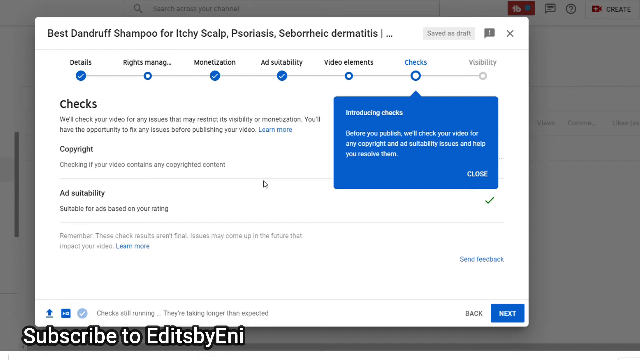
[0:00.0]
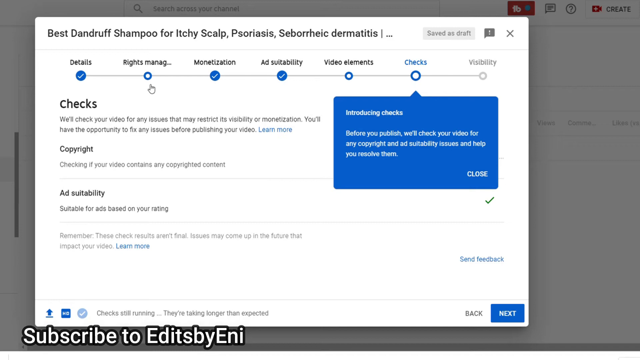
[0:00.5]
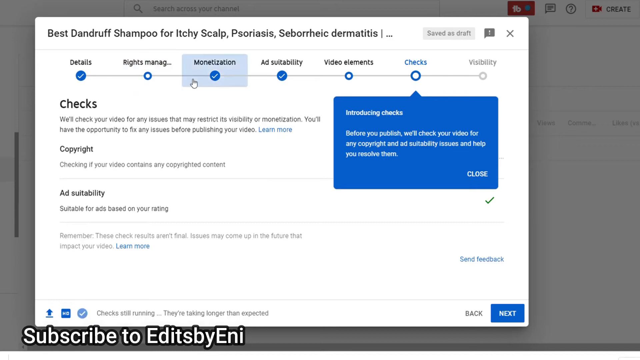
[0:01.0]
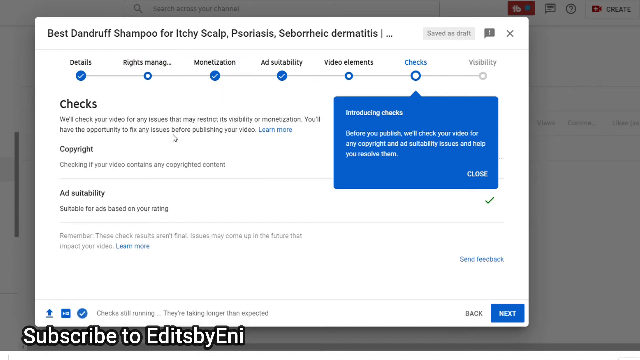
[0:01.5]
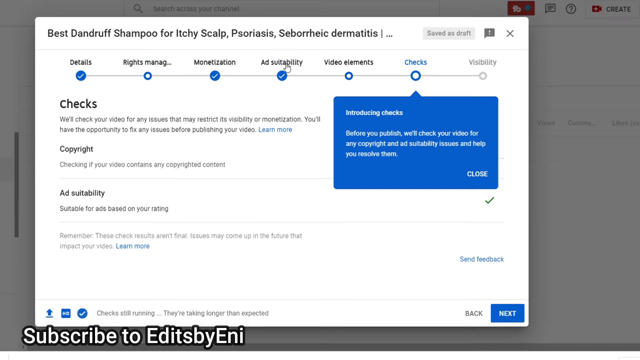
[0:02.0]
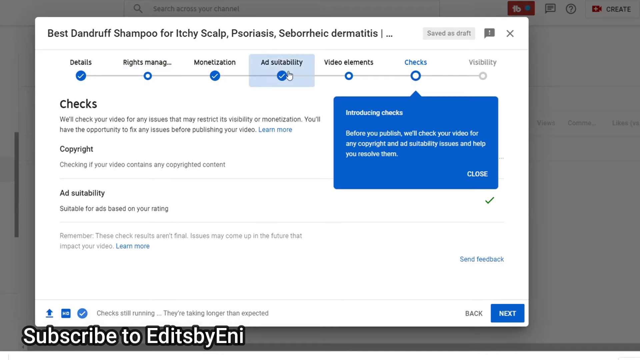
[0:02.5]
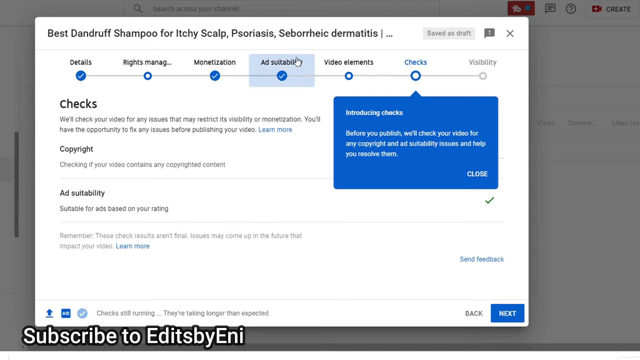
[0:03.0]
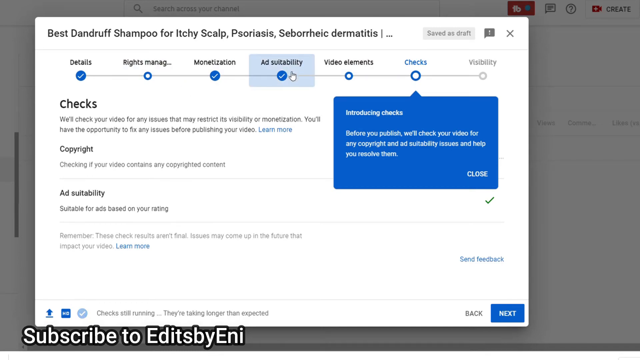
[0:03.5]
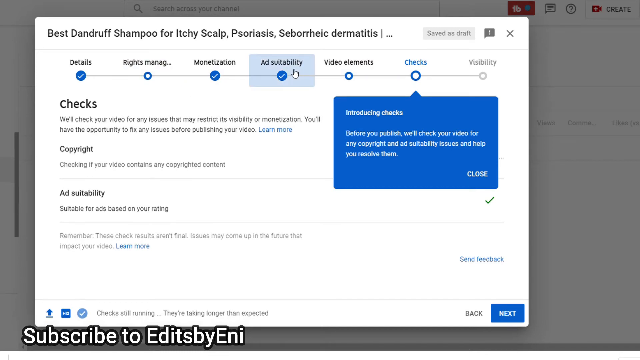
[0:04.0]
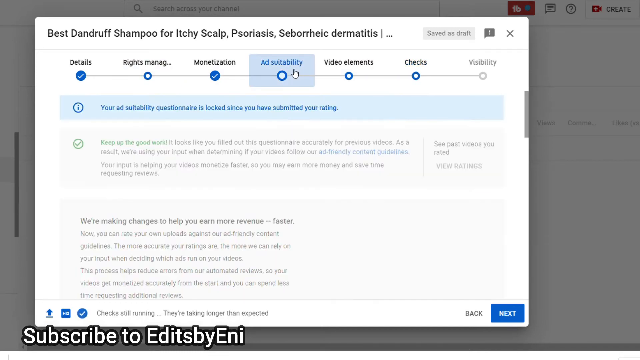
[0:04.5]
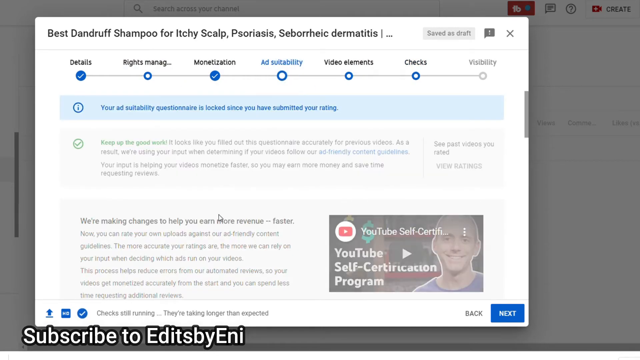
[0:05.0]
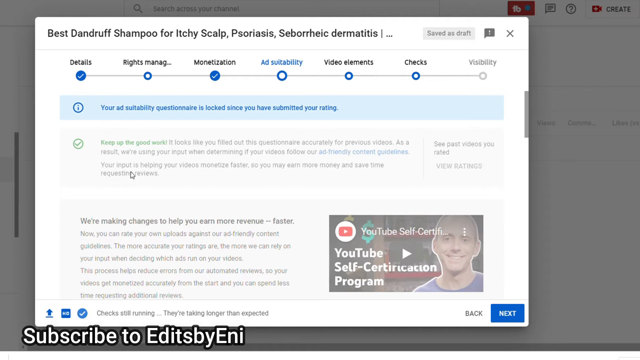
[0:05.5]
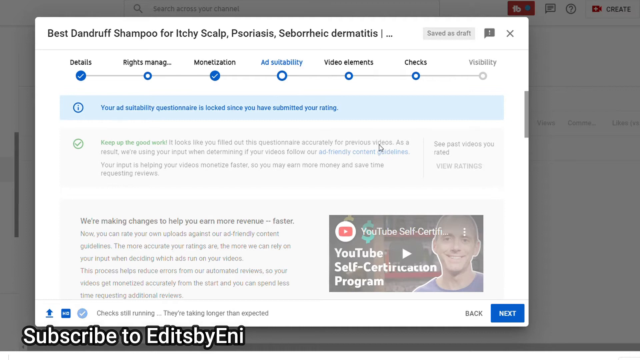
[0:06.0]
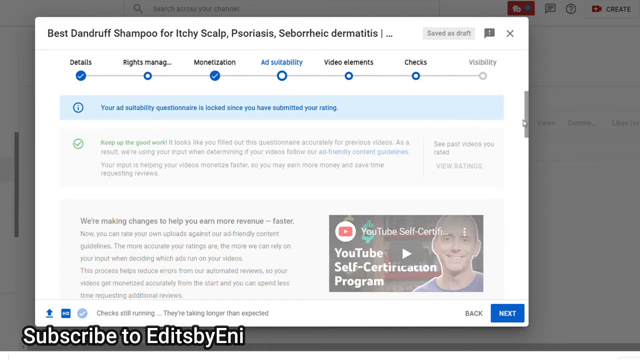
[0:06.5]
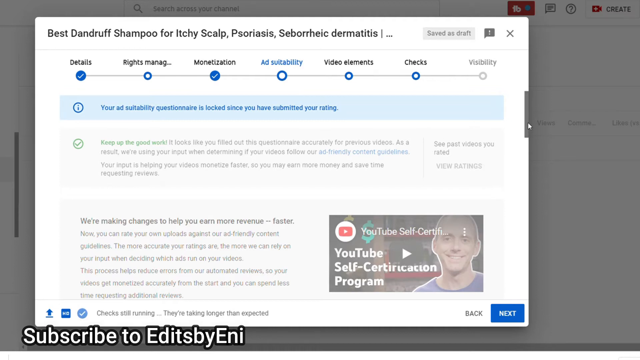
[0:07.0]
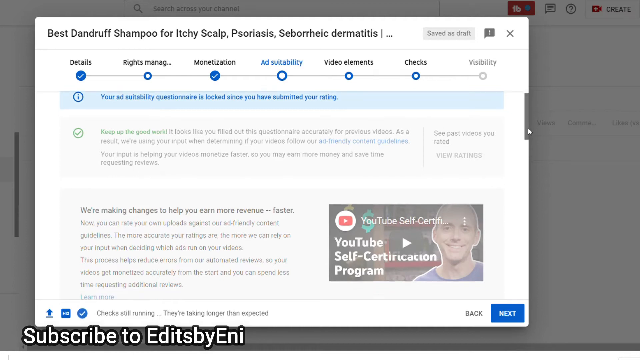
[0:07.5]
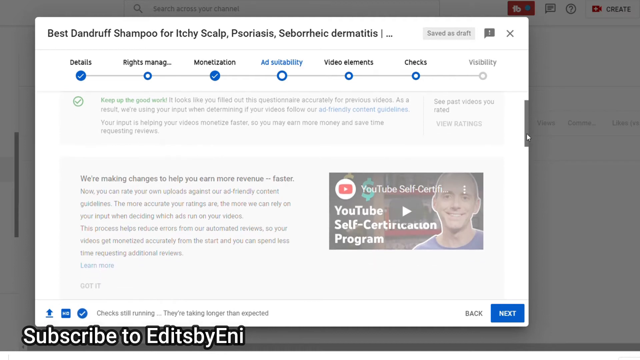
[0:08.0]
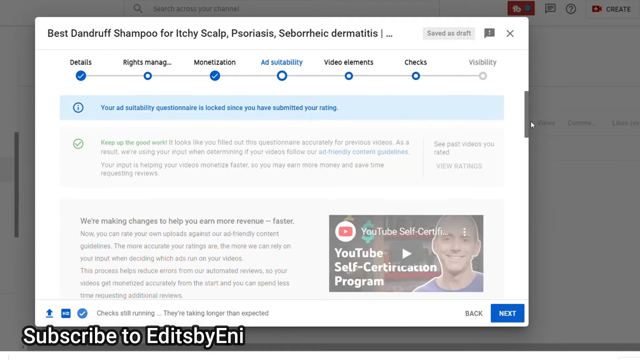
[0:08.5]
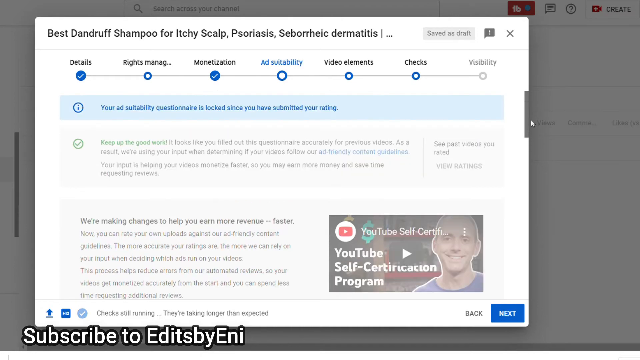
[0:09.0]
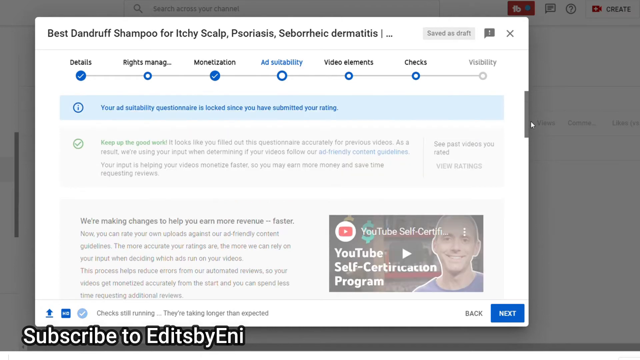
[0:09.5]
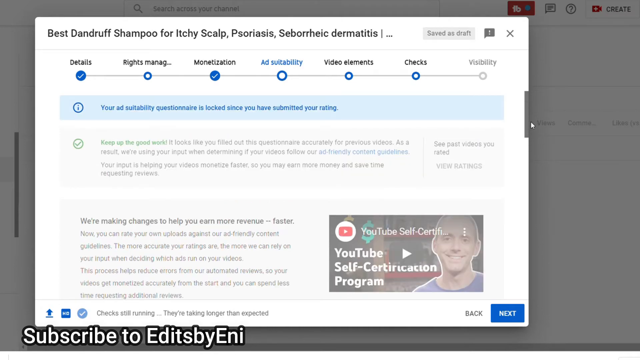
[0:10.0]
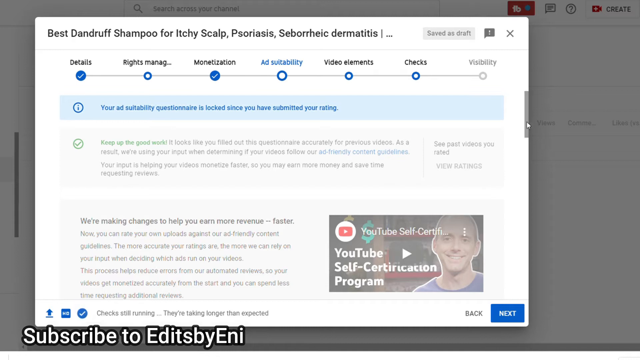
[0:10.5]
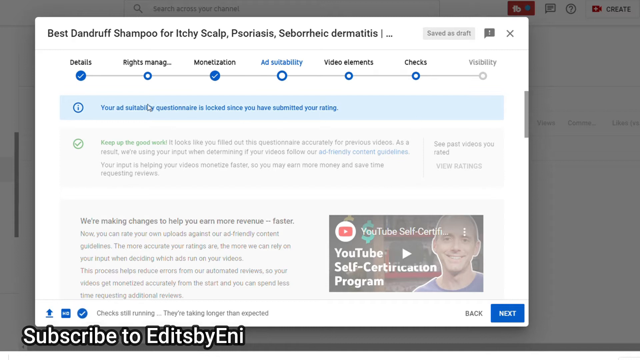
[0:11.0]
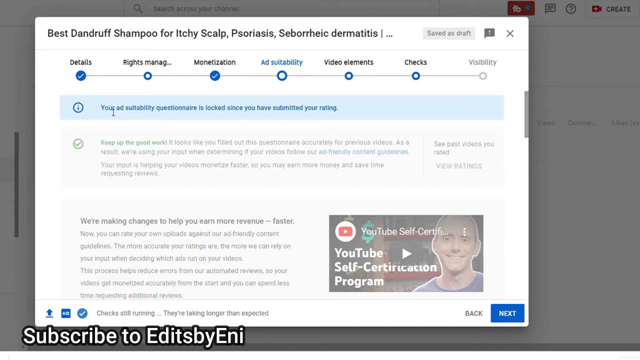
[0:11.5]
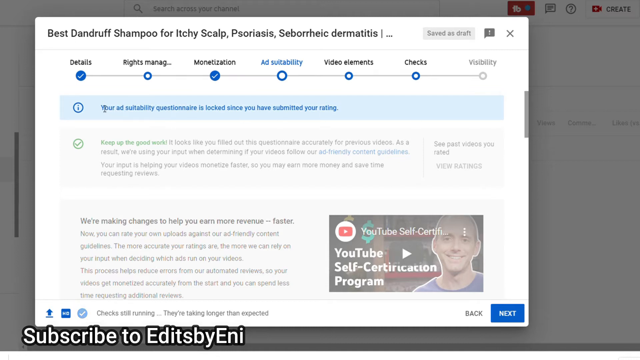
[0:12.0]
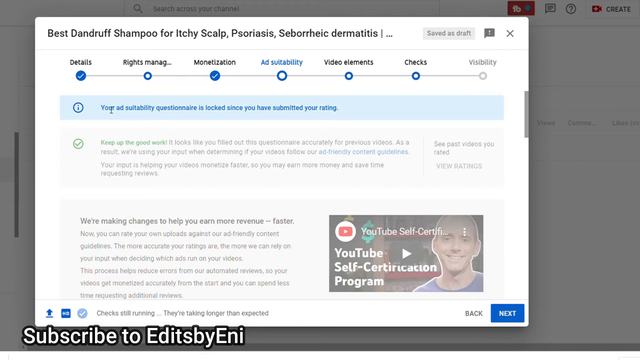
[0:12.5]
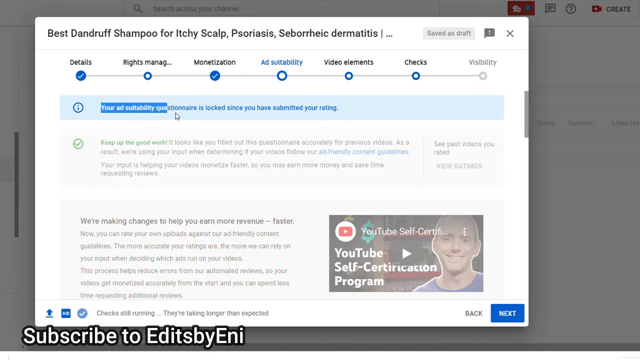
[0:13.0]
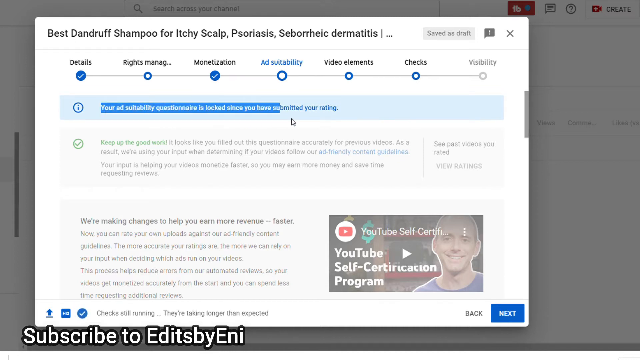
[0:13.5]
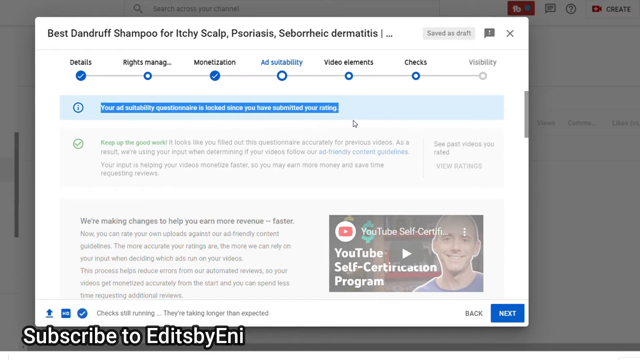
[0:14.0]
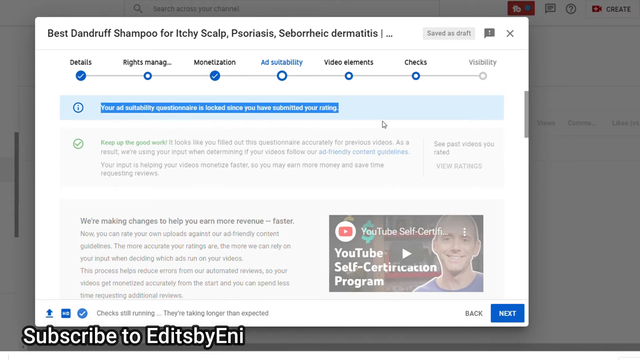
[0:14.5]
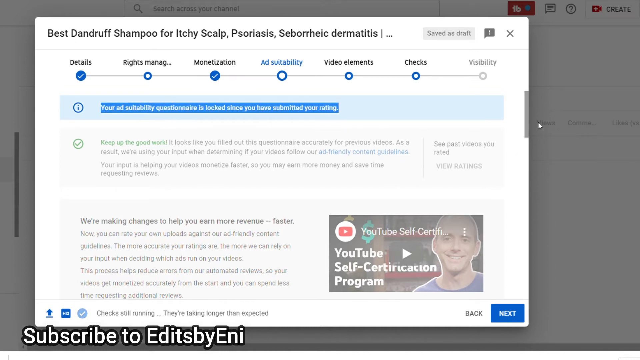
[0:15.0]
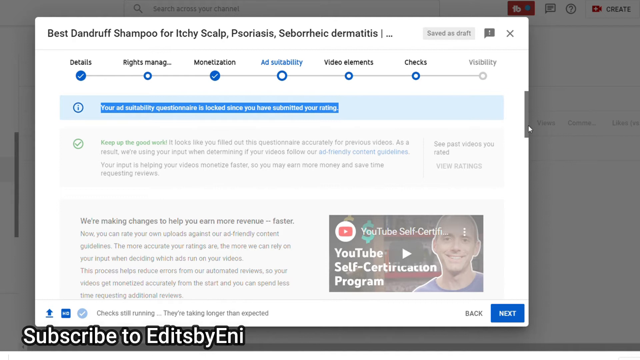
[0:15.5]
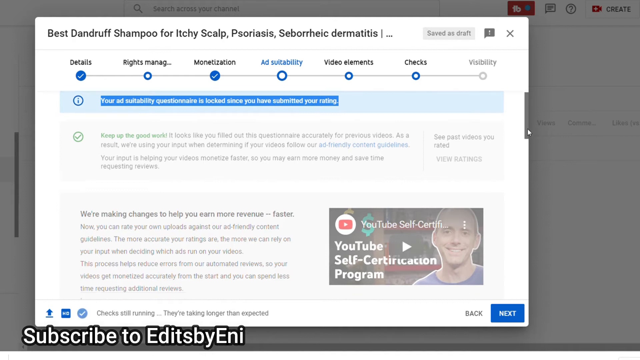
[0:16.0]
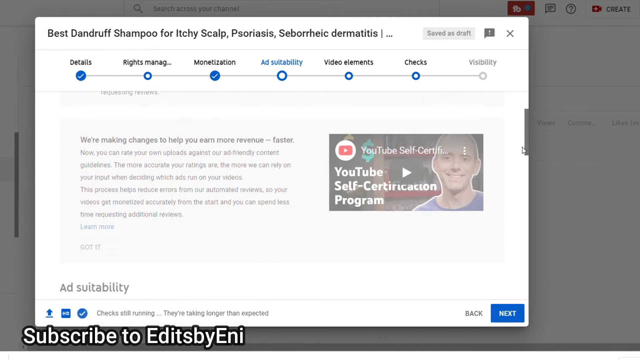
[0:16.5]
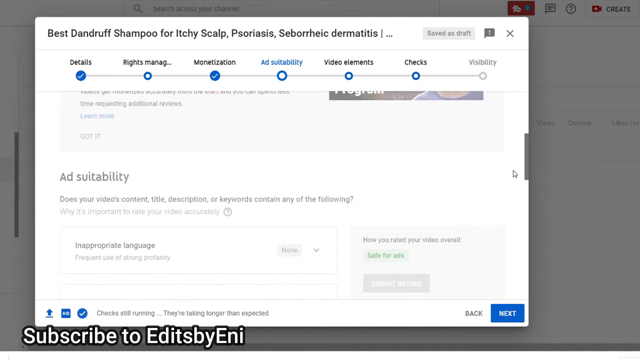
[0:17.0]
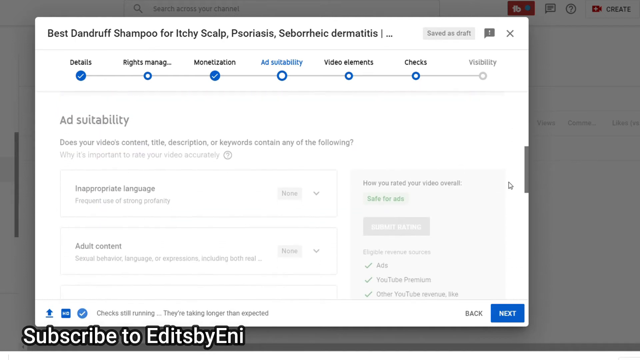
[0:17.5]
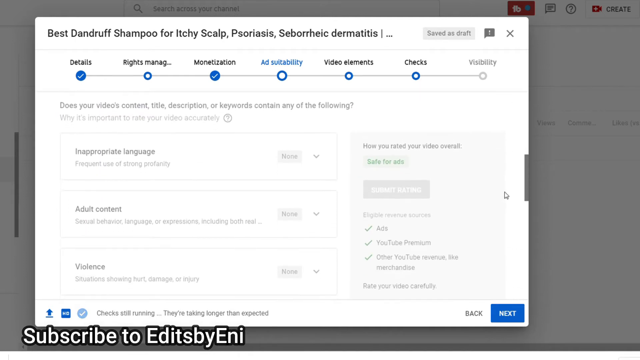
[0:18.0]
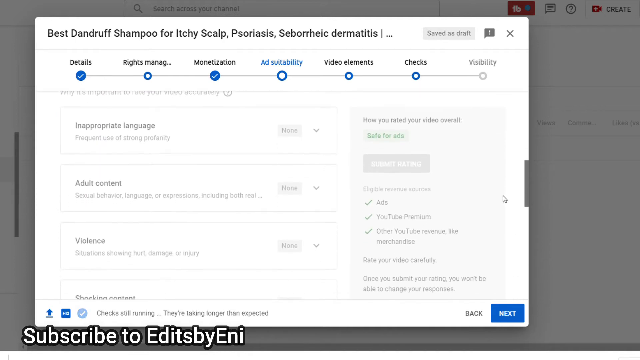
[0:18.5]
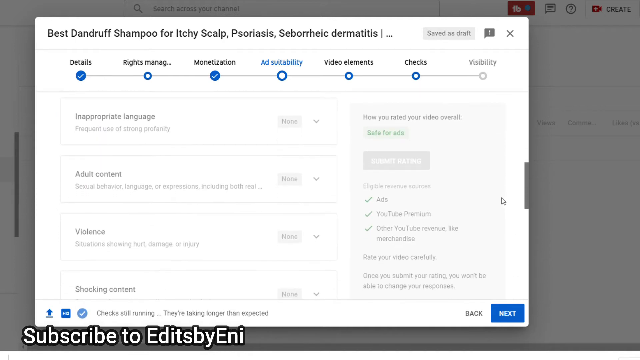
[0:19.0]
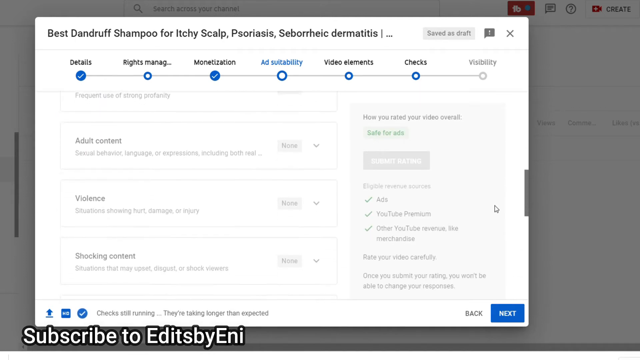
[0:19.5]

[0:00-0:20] A window shows a large white rectangular dialog box with the header "best dandruff shampoo for itchy scalp psoriasis etc". Below it is a horizontal timeline with blue pointers for options such as details, rights management, monetization and ad suitability; there are 7 options like this, and below them each option is explained. A white mouse pointer moves up from below toward the timeline, pointing first at rights management in second place, then at monetization, then ad suitability, then video elements, and then back to ad suitability, which is highlighted in a light blue box. It is clicked, and a page explaining ad suitability appears below, with descriptions and a YouTube video attached on the right side. The mouse hovers over the instructions, then moves to the scroll bar on the right, scrolling down and up. Text below the timeline, in blue and on a blue background, is selected from right to left with the mouse pointer, and the screen is scrolled down to show further information about ad suitability.